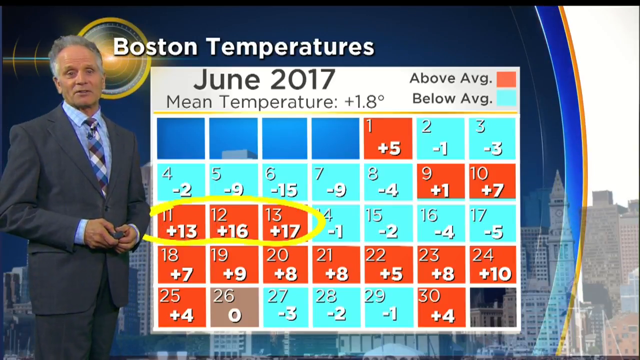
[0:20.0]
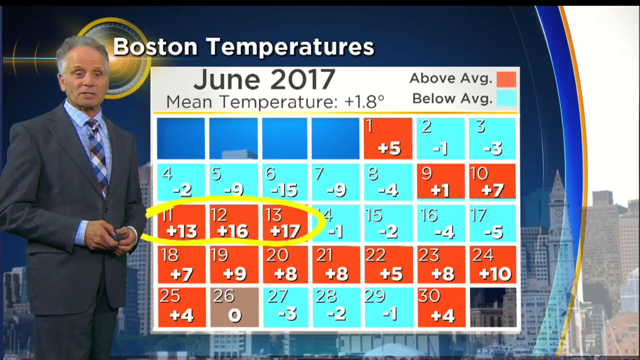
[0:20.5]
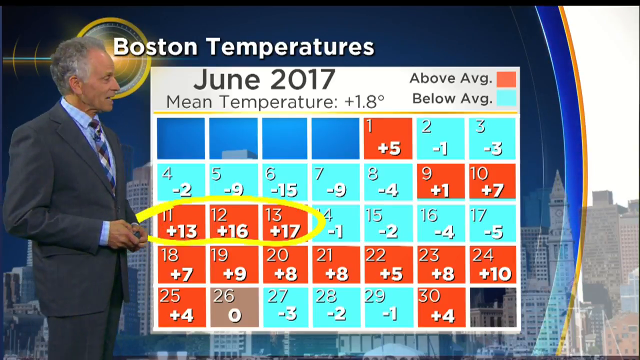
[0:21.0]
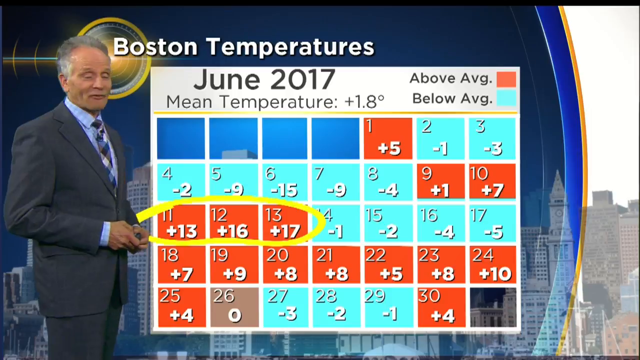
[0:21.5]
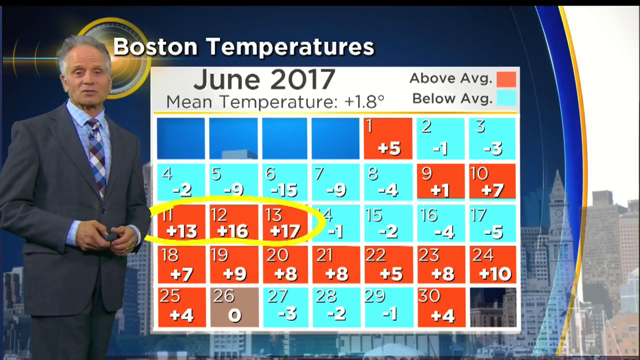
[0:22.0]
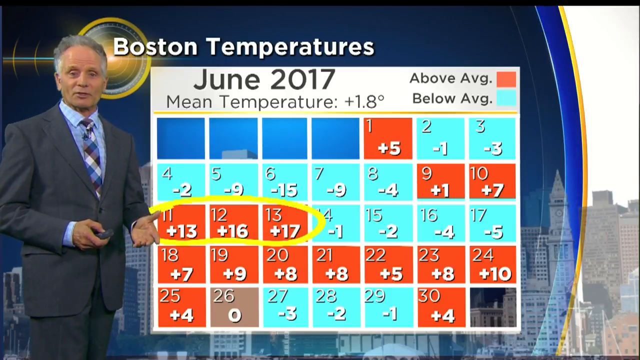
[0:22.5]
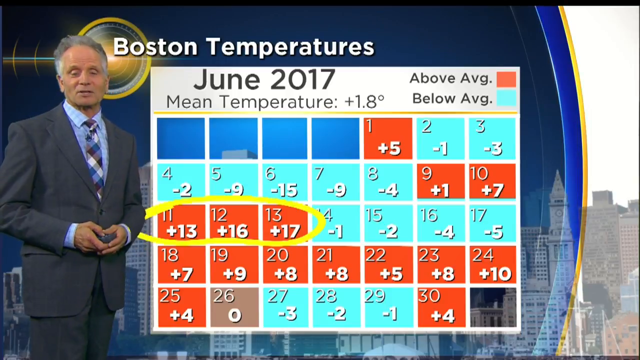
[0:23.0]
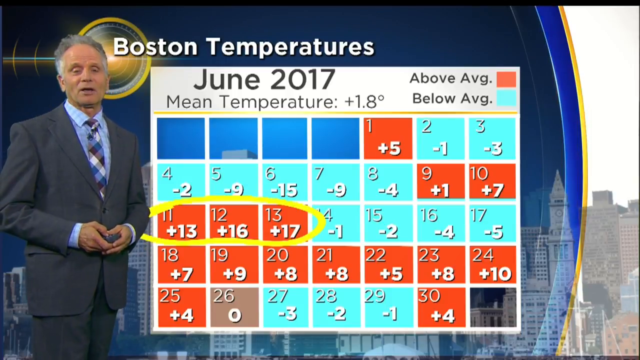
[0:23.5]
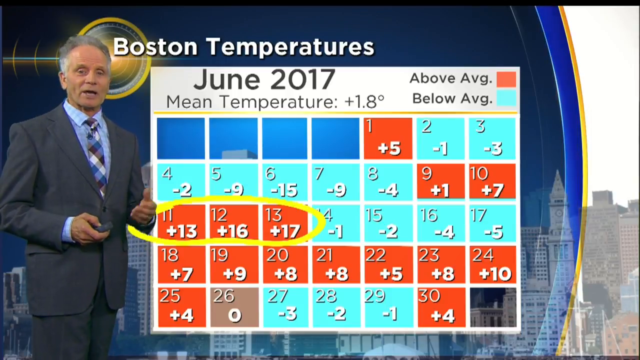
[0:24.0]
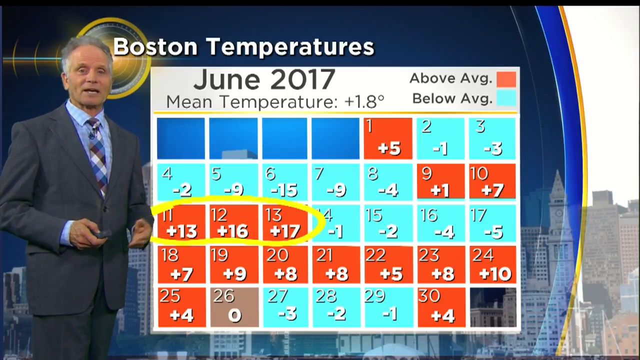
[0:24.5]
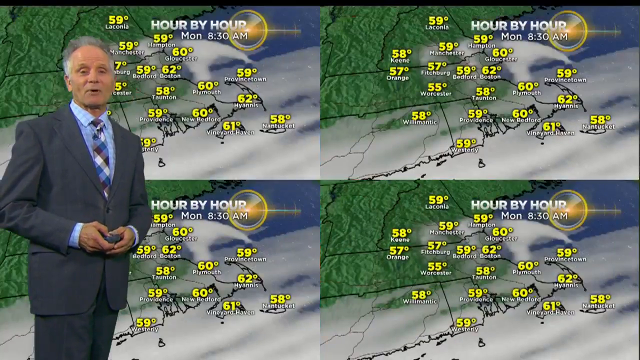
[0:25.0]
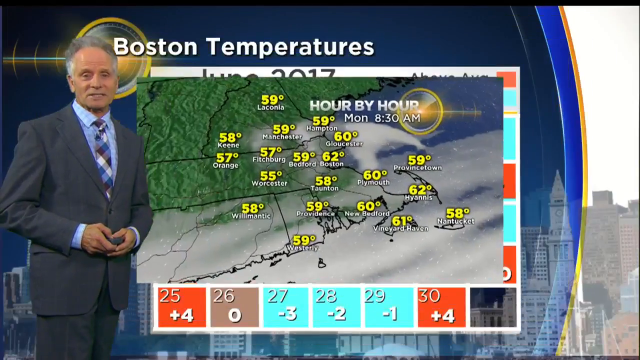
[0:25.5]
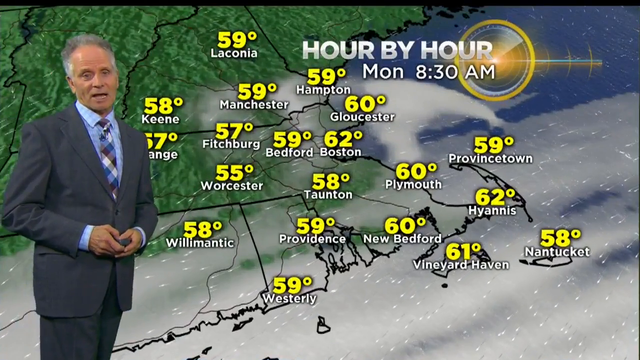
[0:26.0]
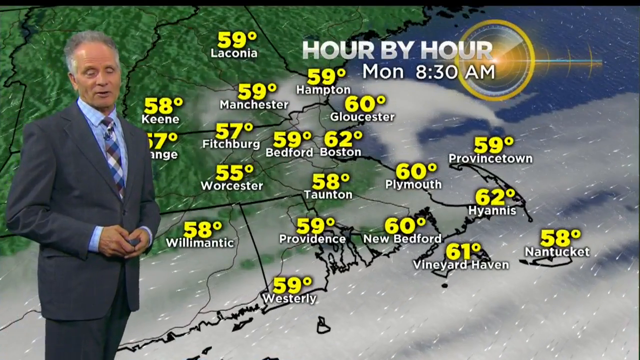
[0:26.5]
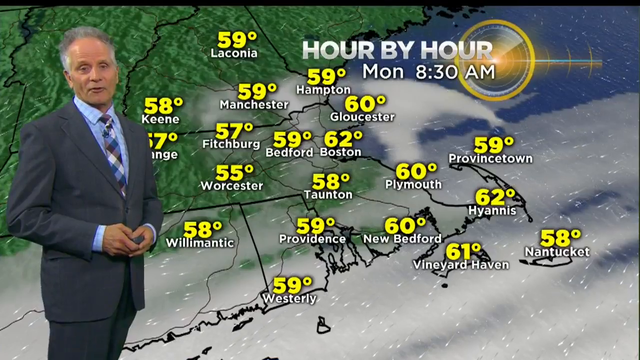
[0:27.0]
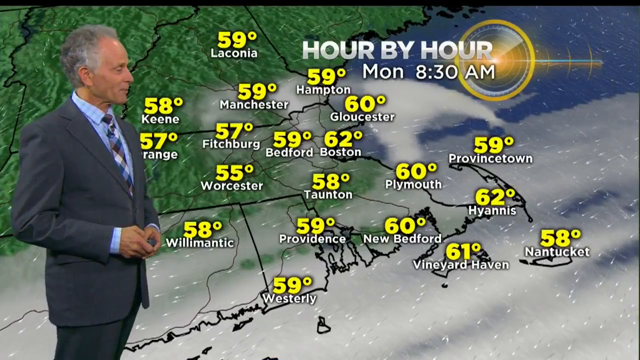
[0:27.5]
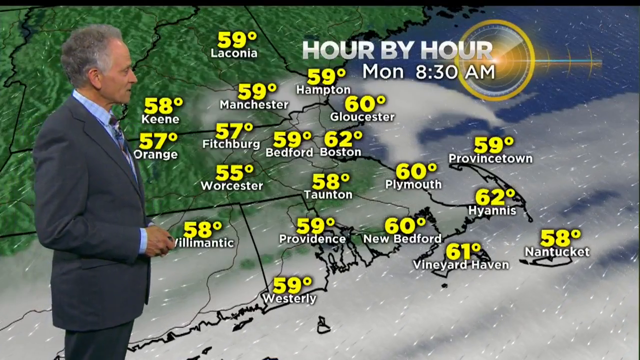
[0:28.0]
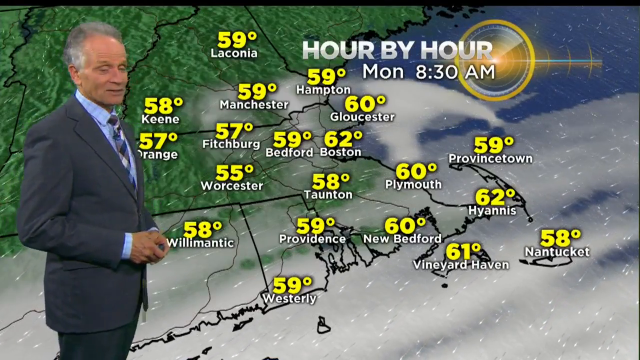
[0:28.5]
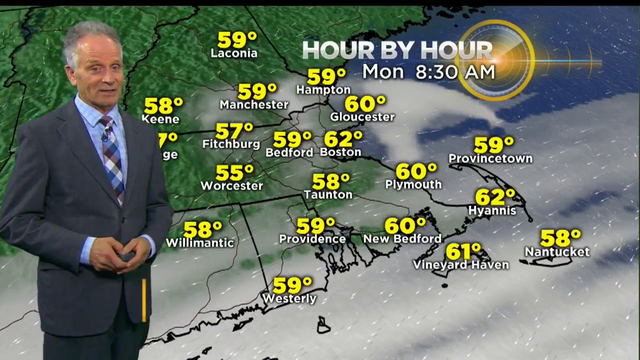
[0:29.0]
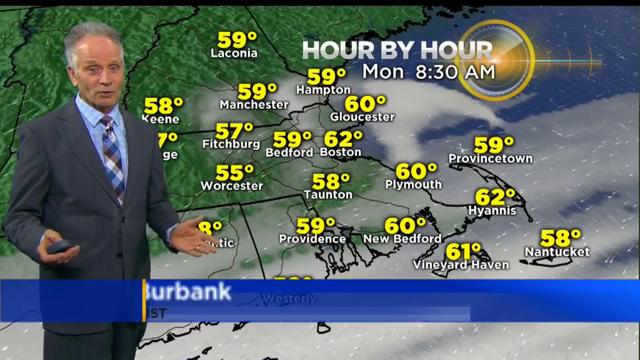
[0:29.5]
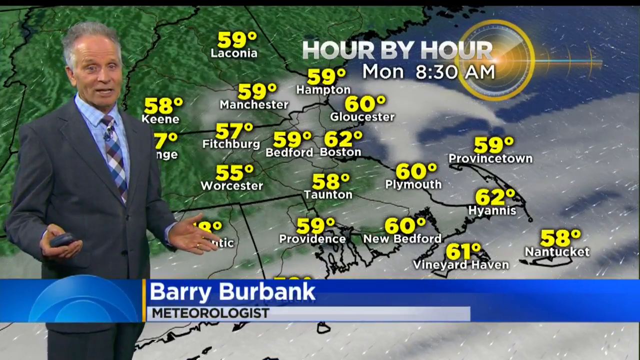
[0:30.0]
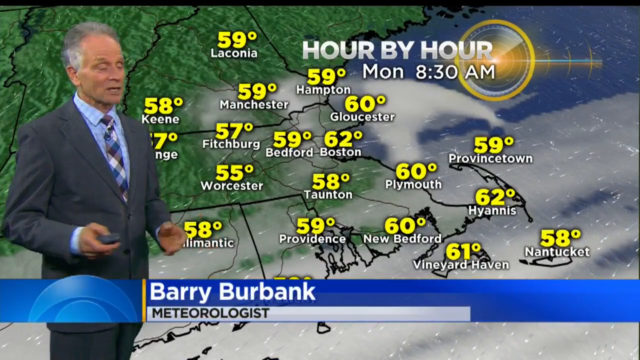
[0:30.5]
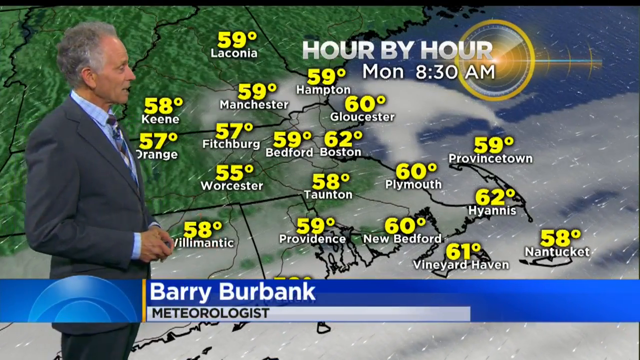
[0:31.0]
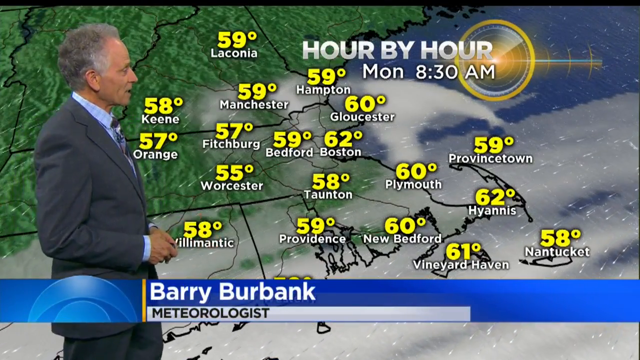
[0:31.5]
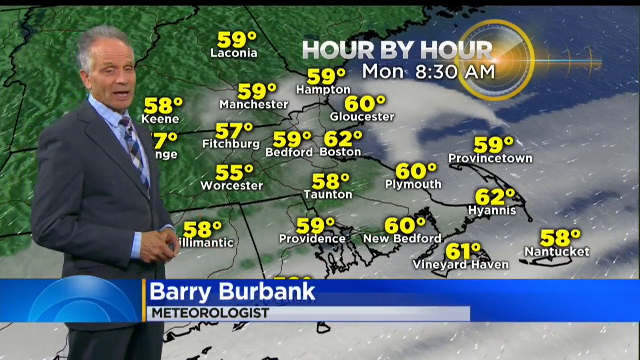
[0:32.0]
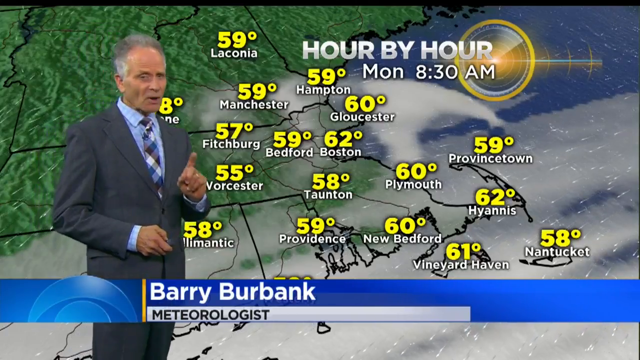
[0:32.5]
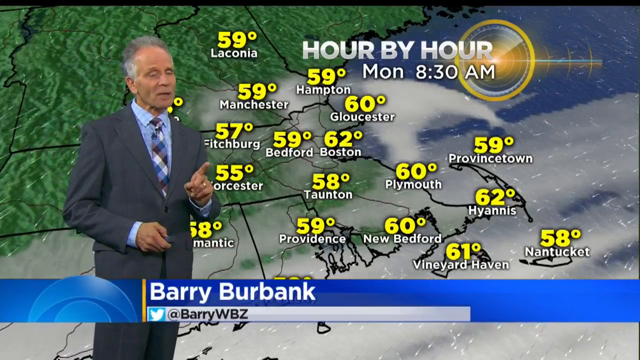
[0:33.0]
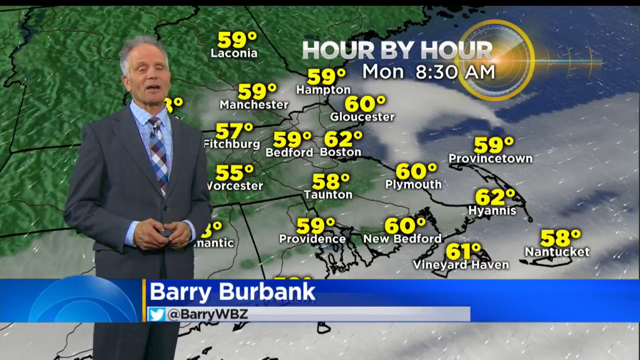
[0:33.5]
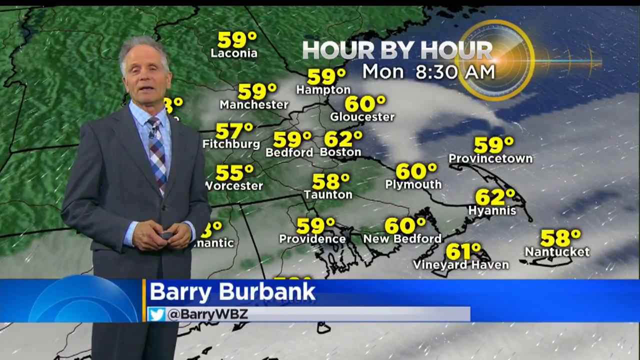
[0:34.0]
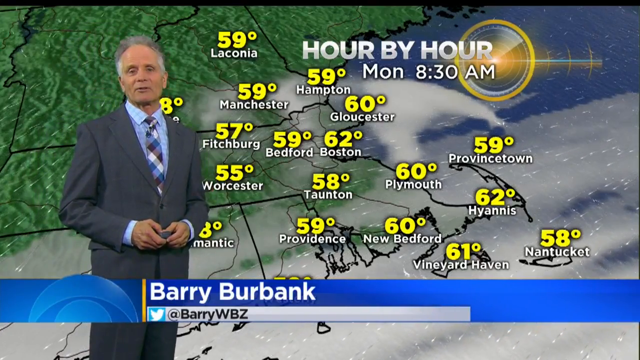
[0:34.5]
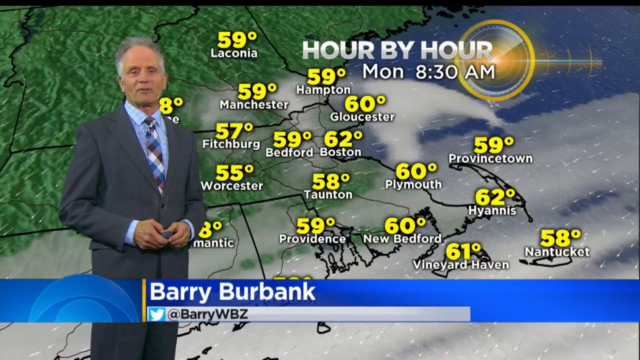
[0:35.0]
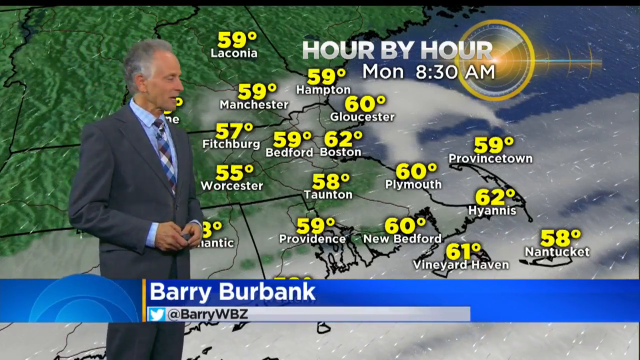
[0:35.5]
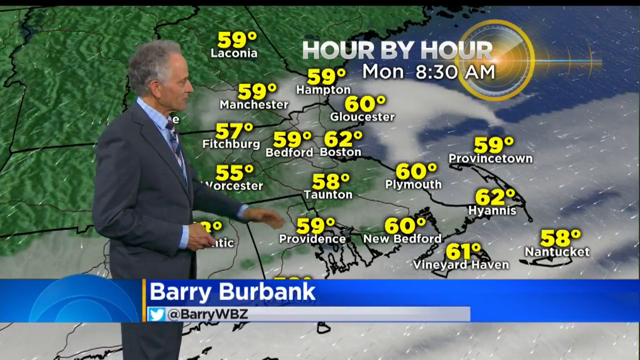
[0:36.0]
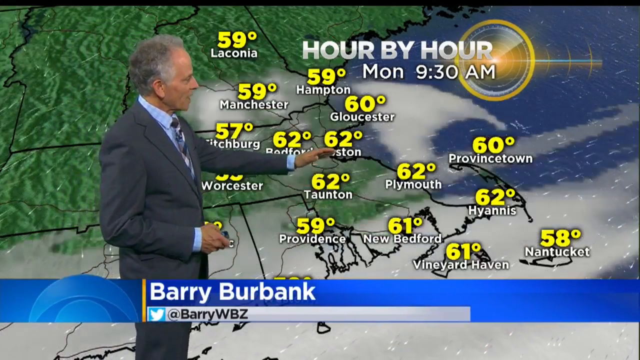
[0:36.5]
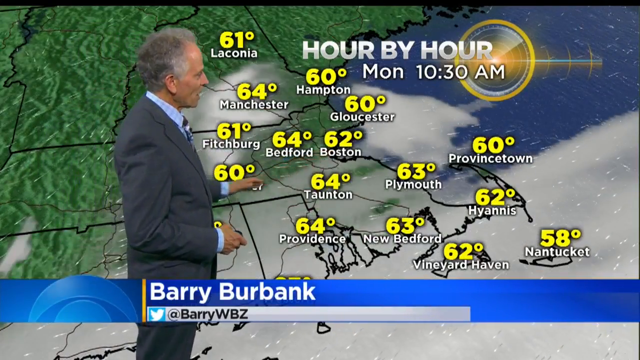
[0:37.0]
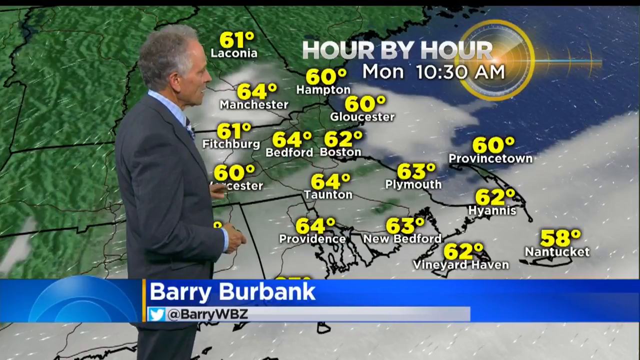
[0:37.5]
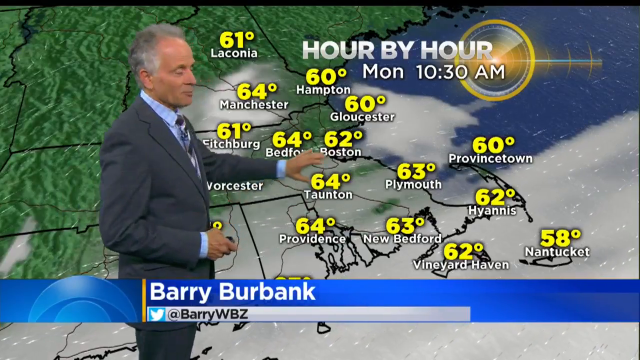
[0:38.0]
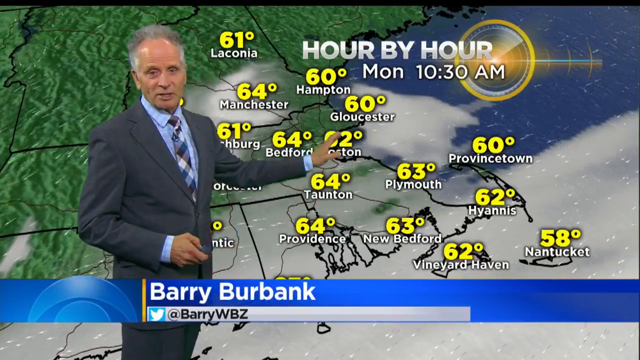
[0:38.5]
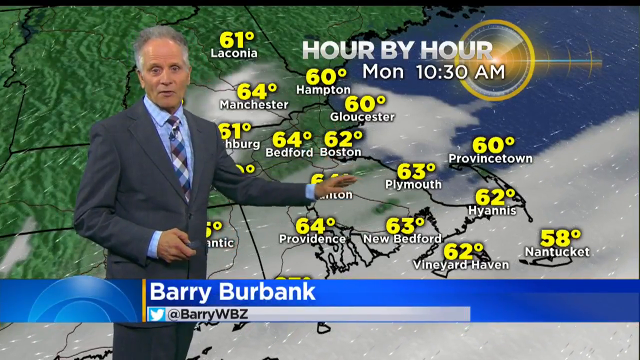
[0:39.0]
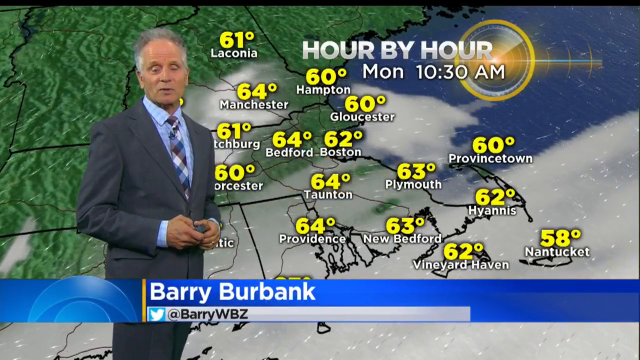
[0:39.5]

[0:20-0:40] The same screen continues, with the meteorologist to the left and the calendar for June 2017 showing temperatures above and below average and the mean temperature. Each box is orange or teal, and yellow circles surround three orange dates. He is talking. The display then goes into four different boxes of what looks like another temperature forecast, then lands on just one of them, with "hour by hour" at the top, showing temperatures for different cities in the Boston area. The forecaster continues to speak; he wears a gray suit, a blue shirt and a checkered-looking tie, and has gray hair. His name, "Barry Burbank", appears at the bottom in blue, and he is a meteorologist. There is also some sort of disc or circle at the top, and the states are visible.